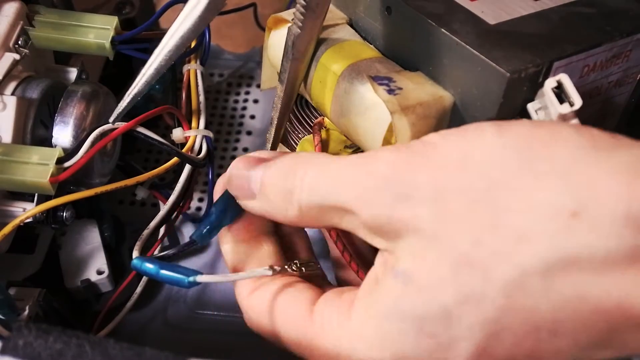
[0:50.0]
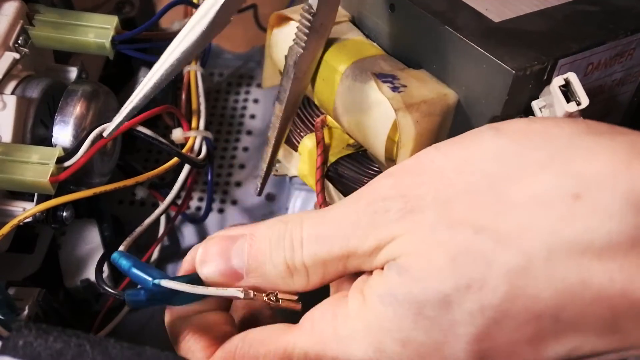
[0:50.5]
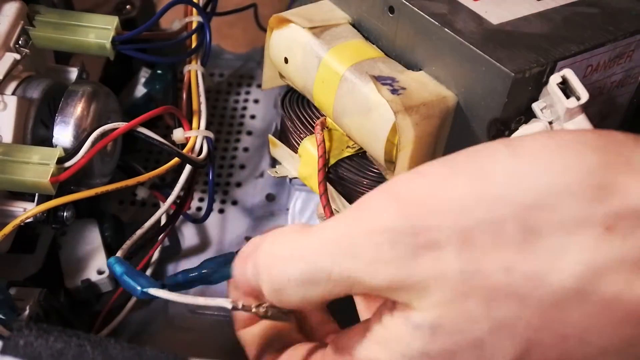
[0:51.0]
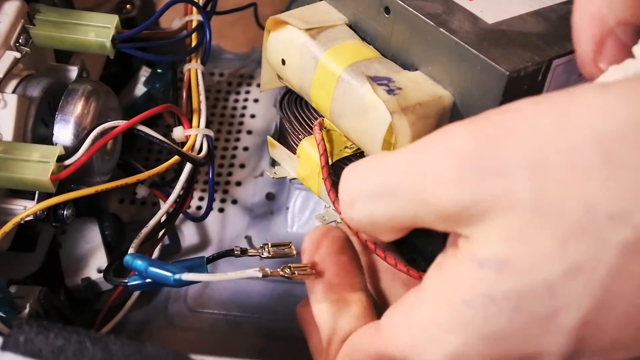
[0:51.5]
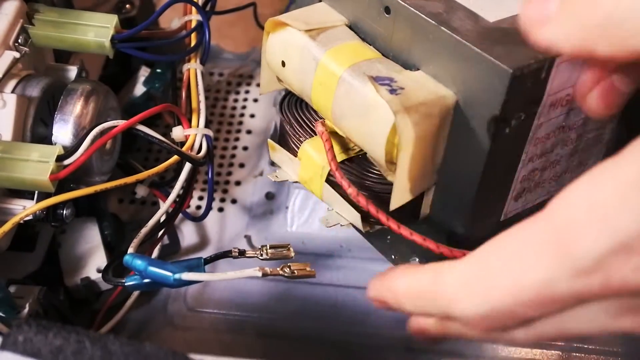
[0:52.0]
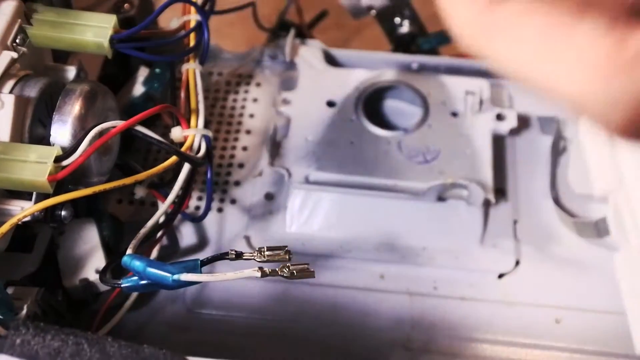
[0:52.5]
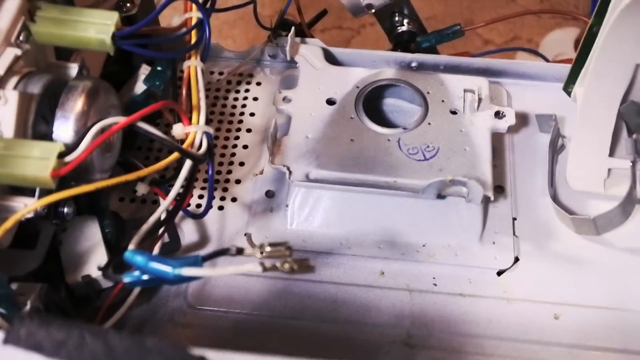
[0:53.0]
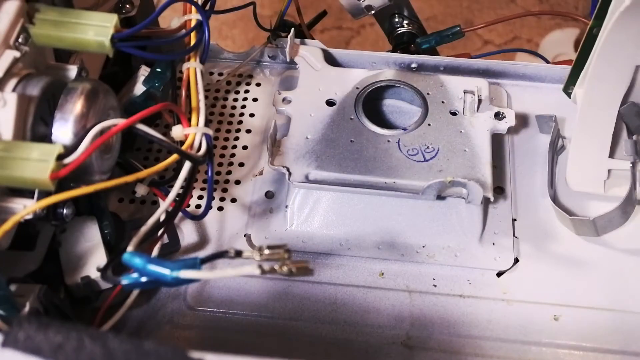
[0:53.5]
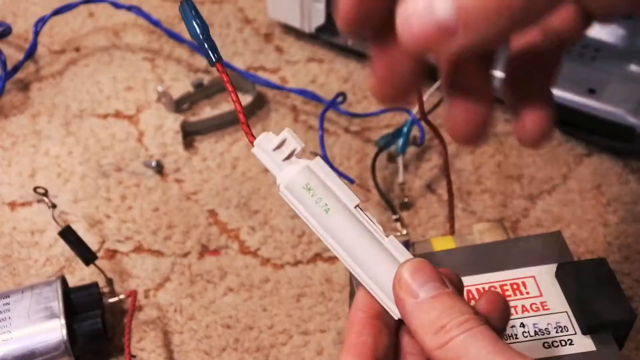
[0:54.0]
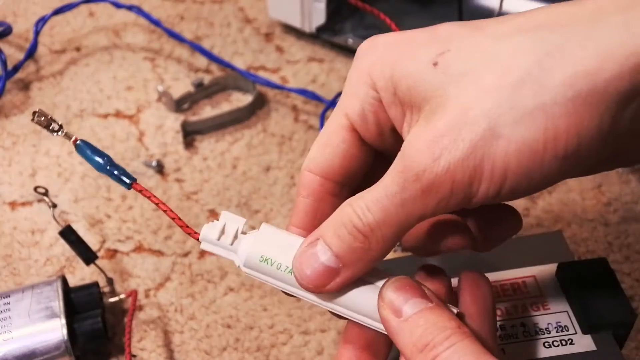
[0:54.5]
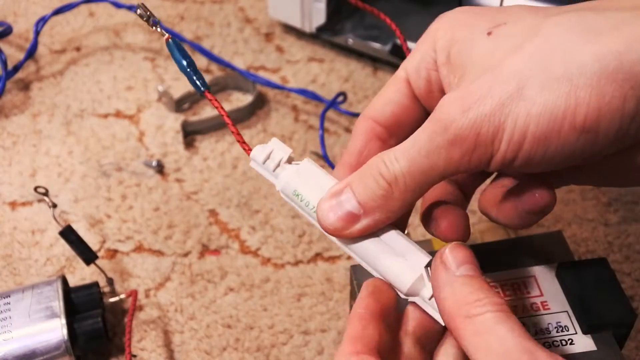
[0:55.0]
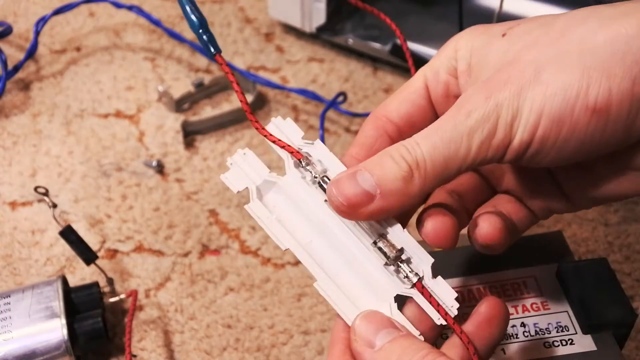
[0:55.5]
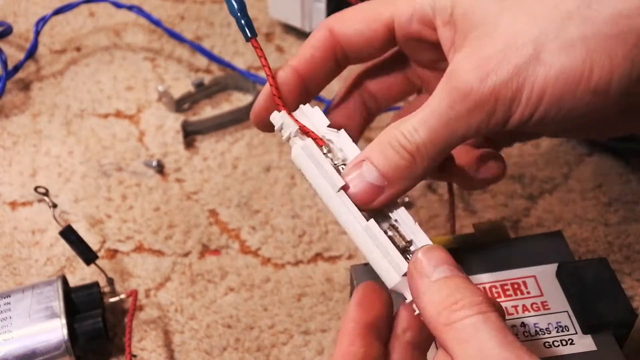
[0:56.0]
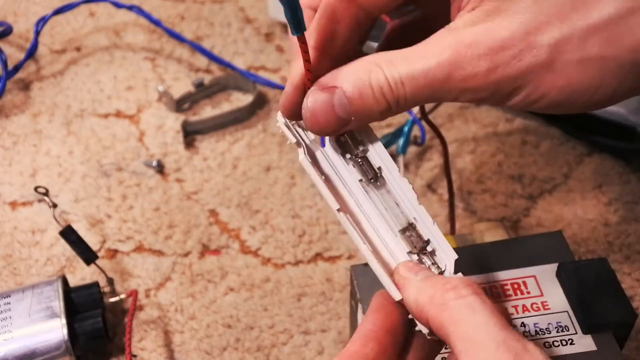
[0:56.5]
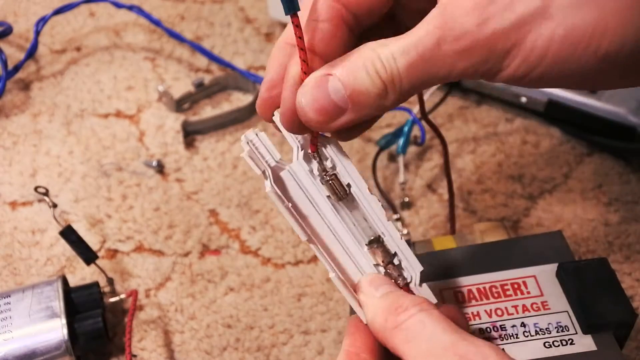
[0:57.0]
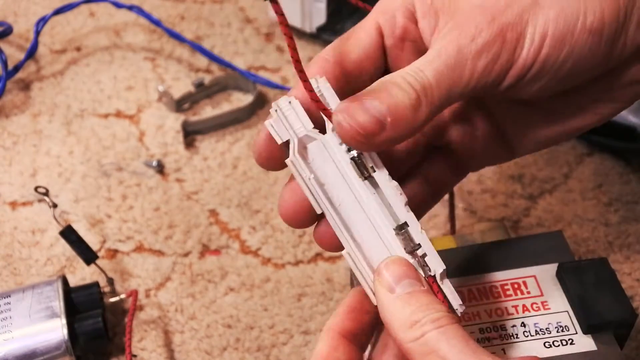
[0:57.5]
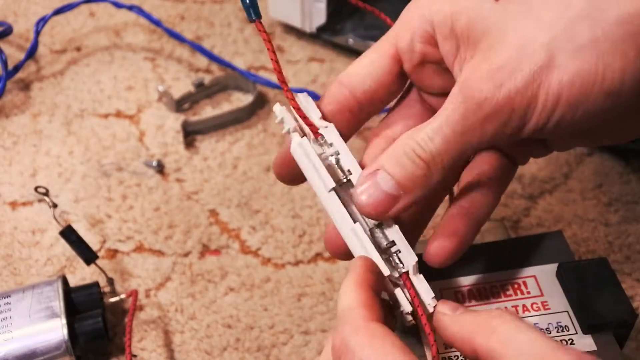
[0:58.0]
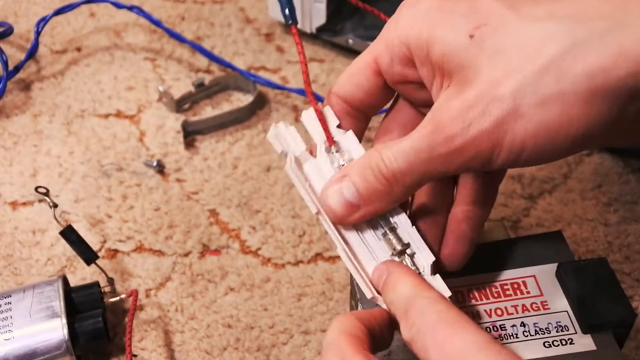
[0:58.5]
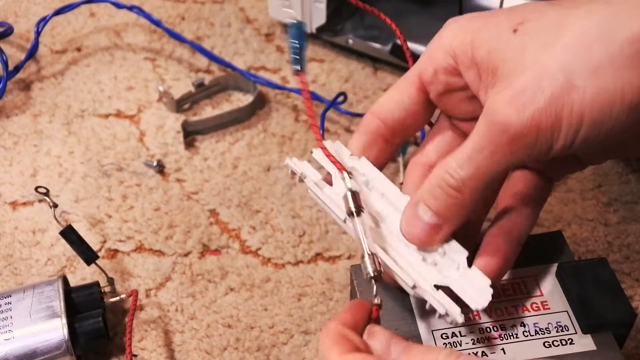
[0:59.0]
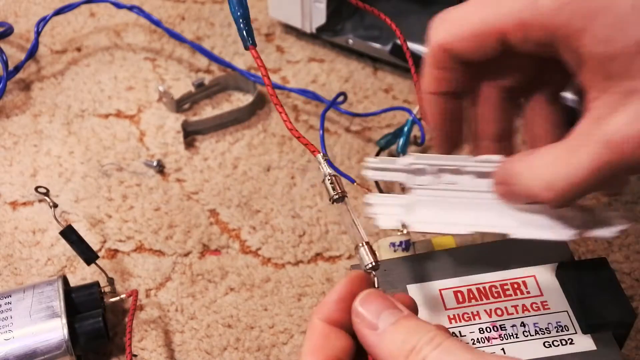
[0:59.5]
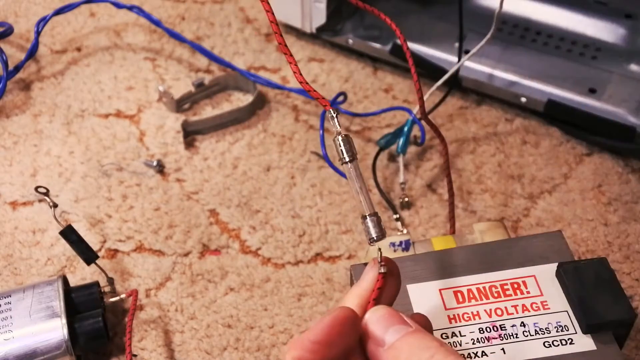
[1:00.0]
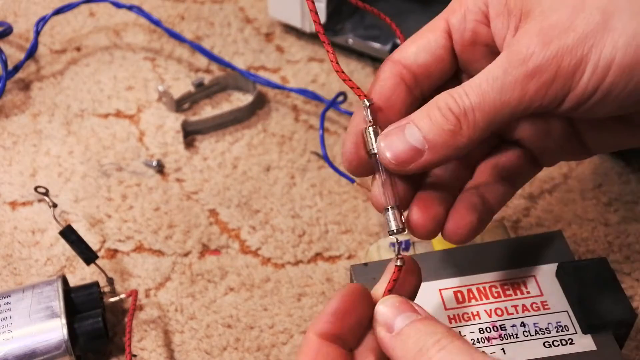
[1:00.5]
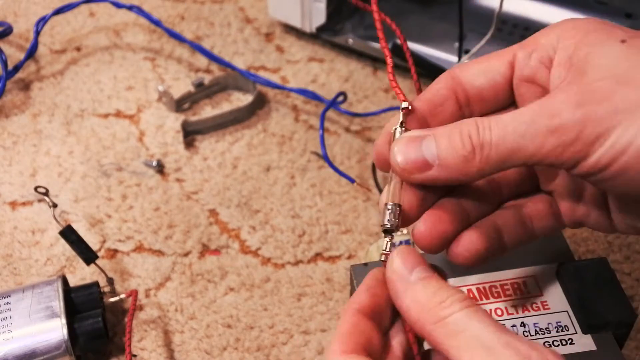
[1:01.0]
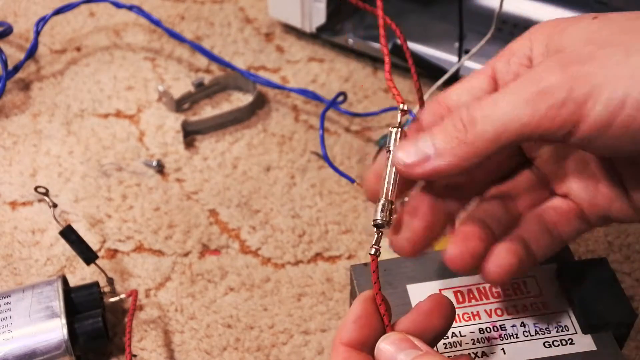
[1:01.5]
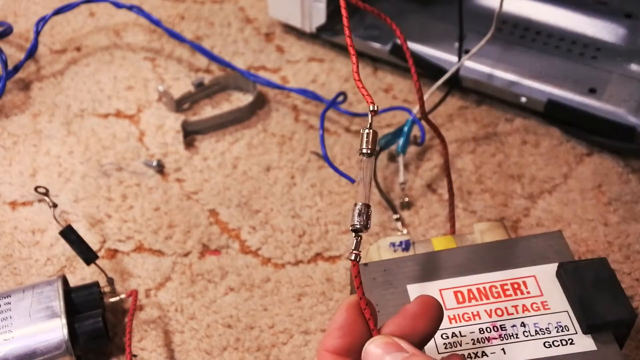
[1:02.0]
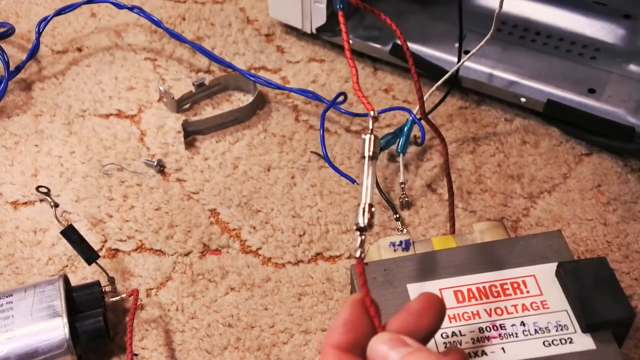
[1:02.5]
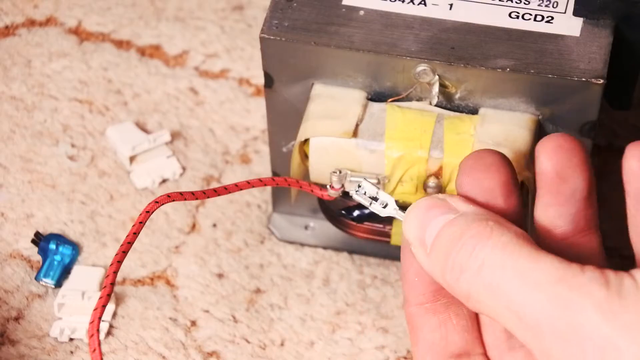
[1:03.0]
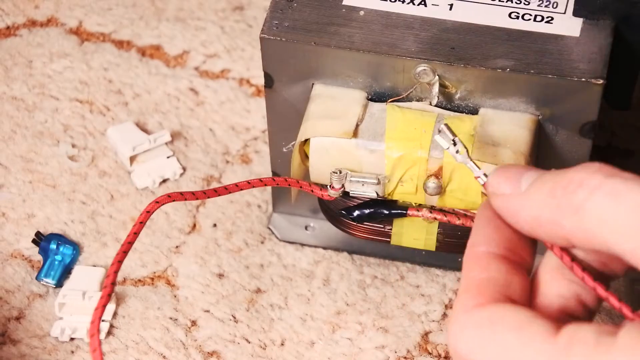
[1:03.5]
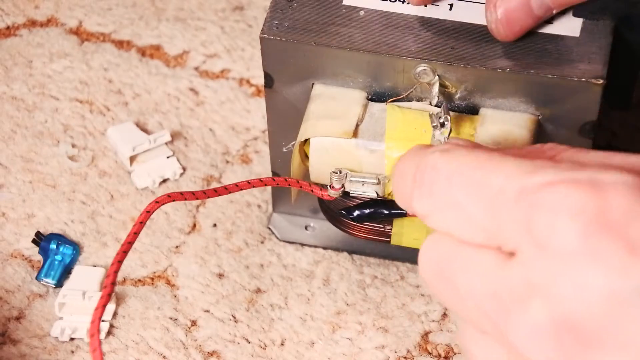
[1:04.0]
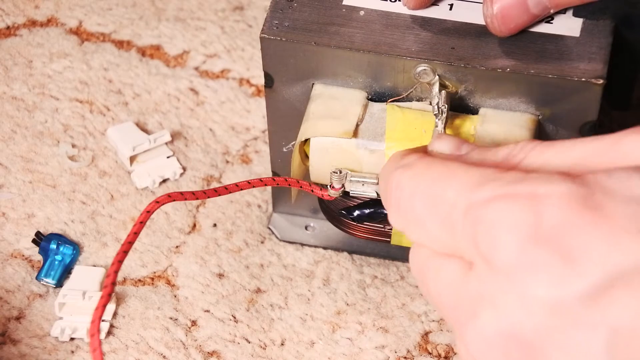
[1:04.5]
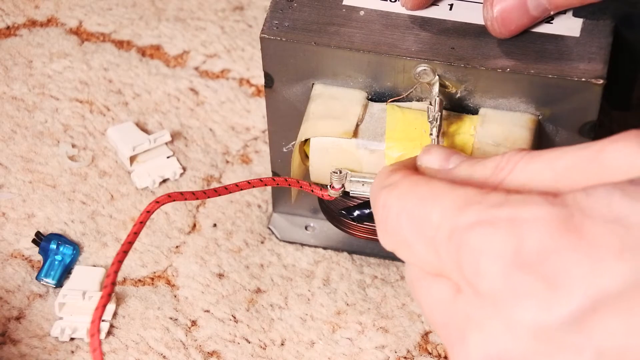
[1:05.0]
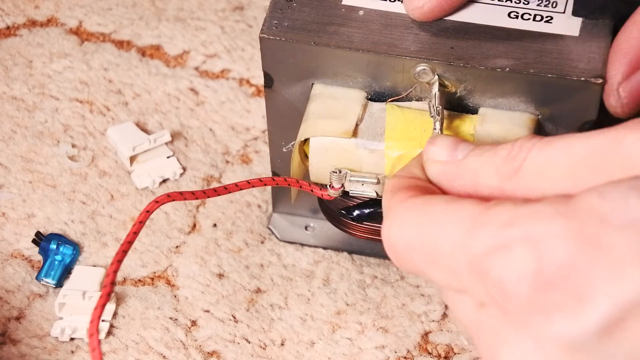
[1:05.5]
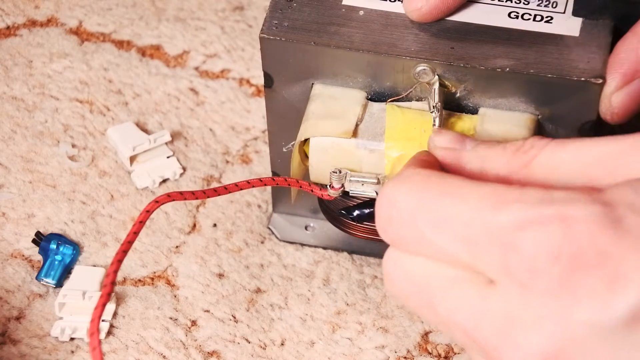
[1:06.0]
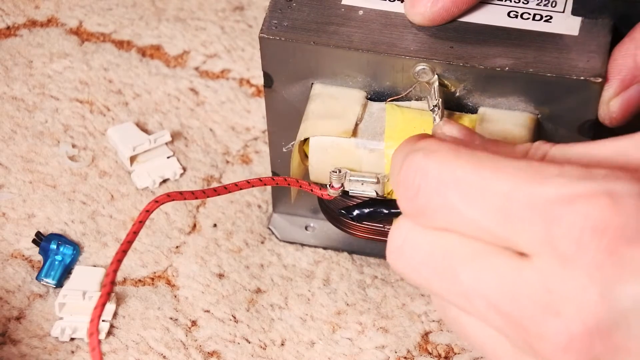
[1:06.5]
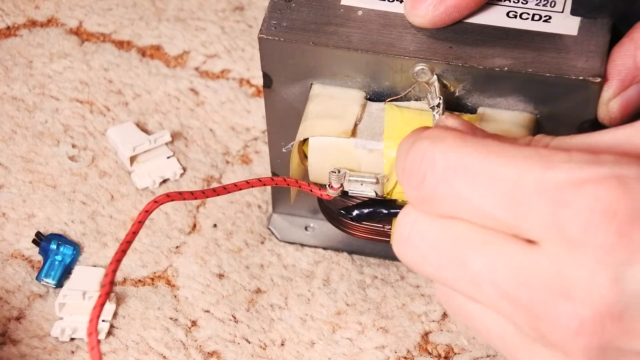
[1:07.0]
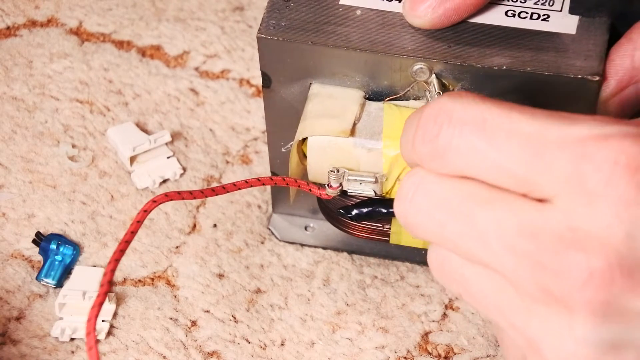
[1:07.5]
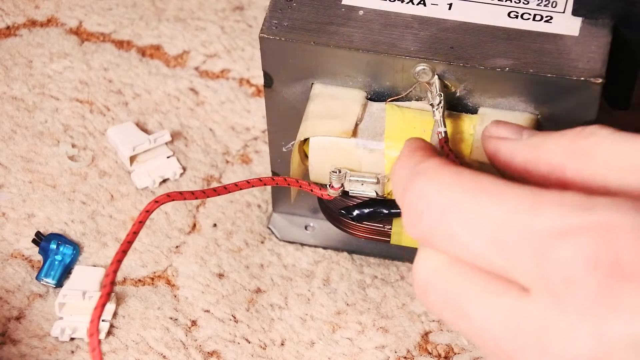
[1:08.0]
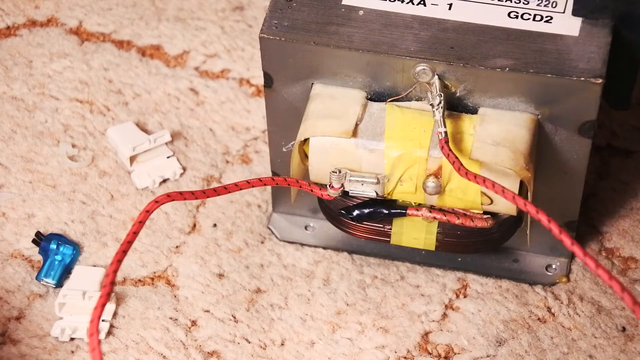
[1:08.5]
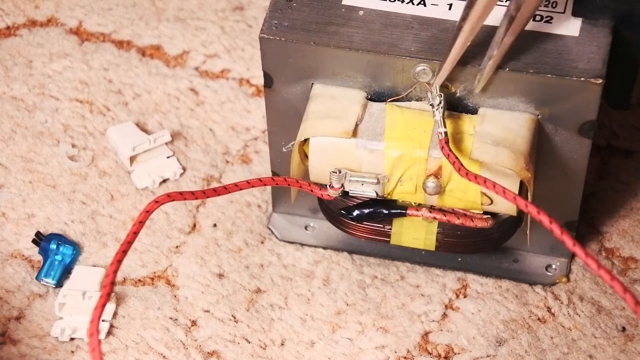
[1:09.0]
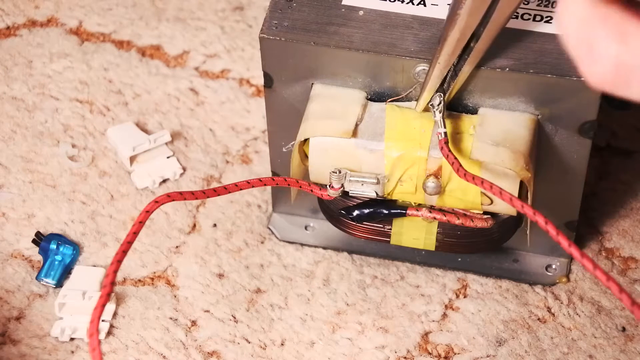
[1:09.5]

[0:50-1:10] The video starts with the South Park character, soldering, and the logo of the Geiber show. The cover of the microwave is unscrewed, and pliers are used to show what is apparently the power supply and to disconnect it. A part that is either the motor, the power supply or the fan is removed, and some other components are taken out of the microwave as well. There may be a fuse. A wire is reconnected, possibly with electrical wire and possibly electrical tape, seemingly as part of a repair.